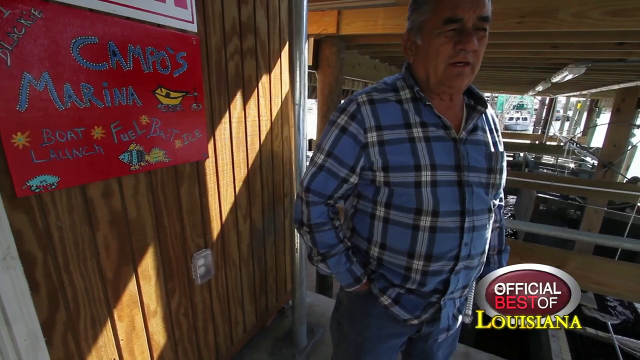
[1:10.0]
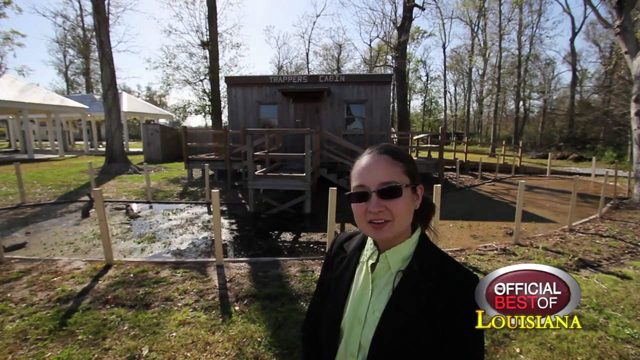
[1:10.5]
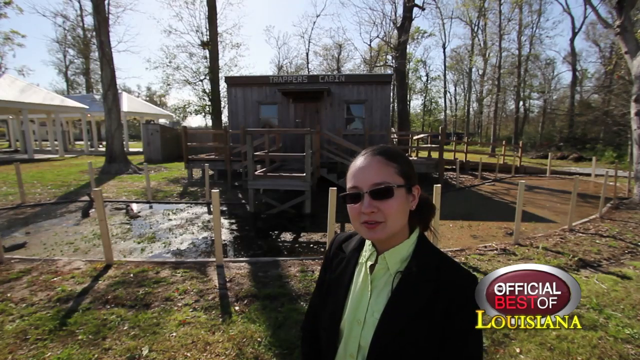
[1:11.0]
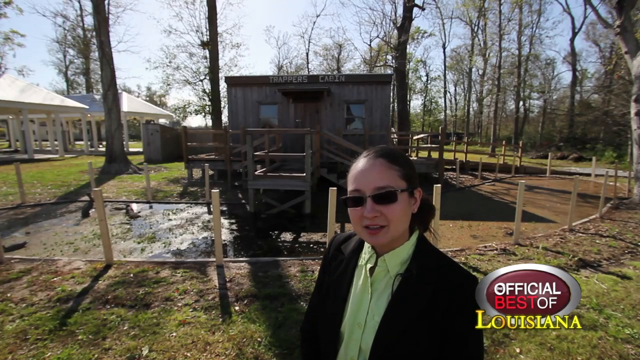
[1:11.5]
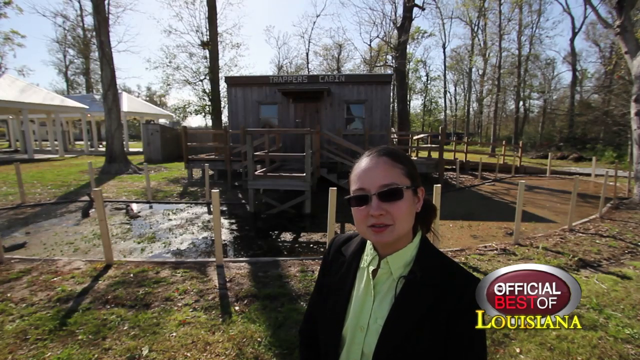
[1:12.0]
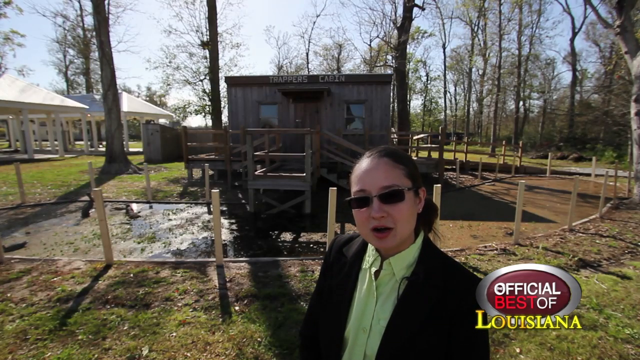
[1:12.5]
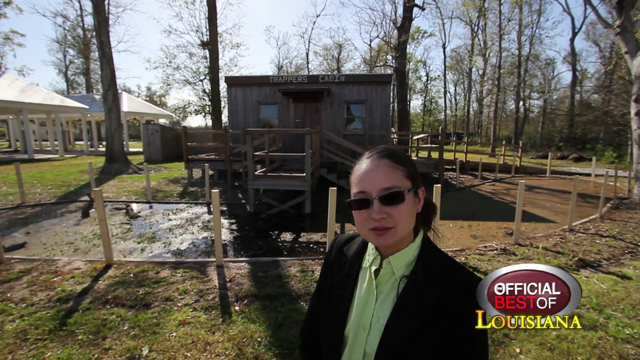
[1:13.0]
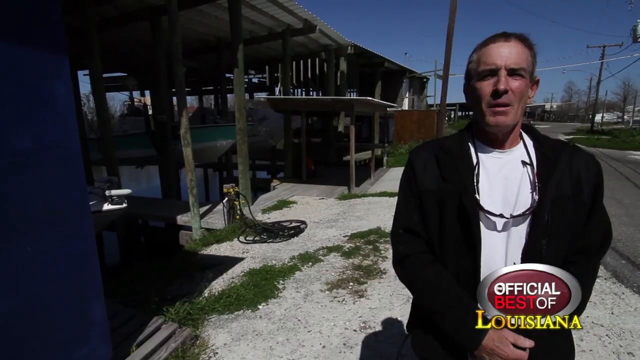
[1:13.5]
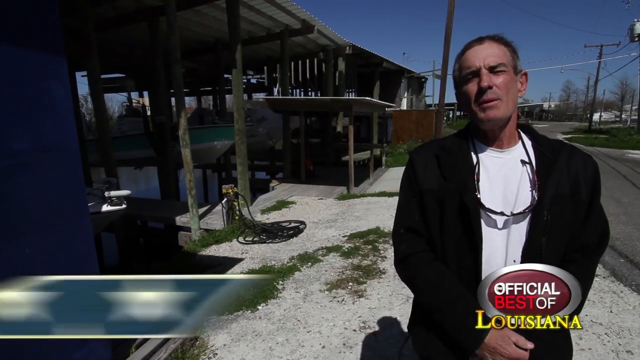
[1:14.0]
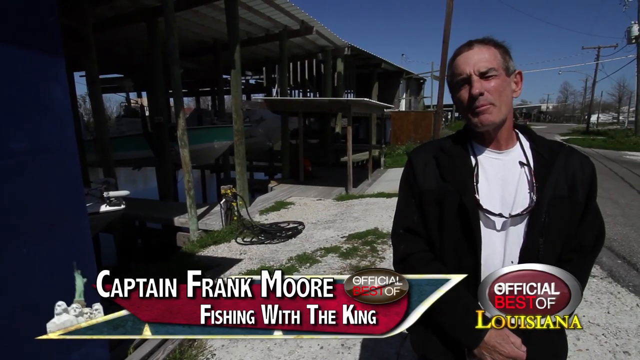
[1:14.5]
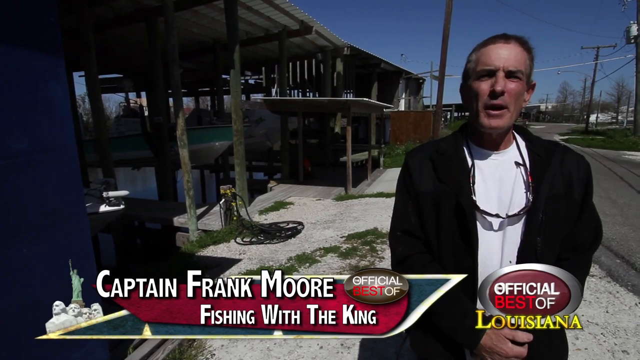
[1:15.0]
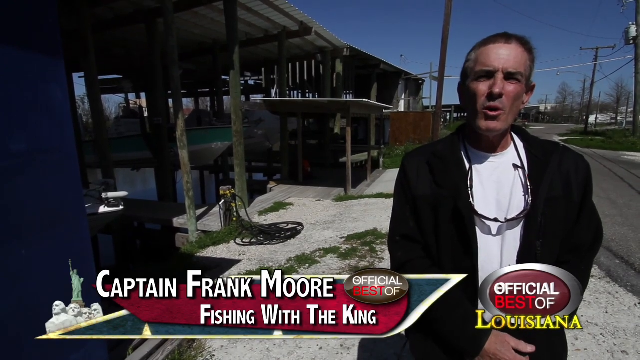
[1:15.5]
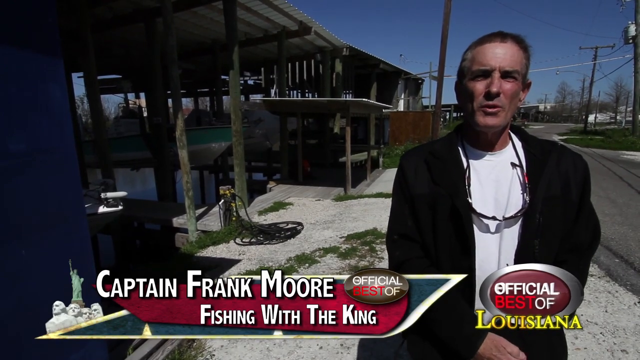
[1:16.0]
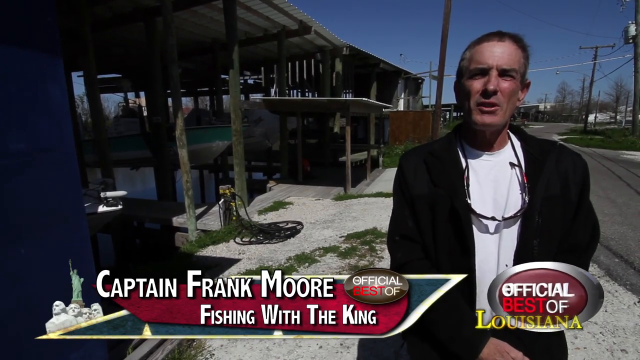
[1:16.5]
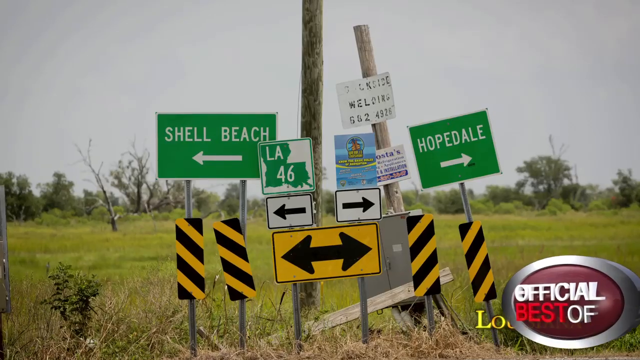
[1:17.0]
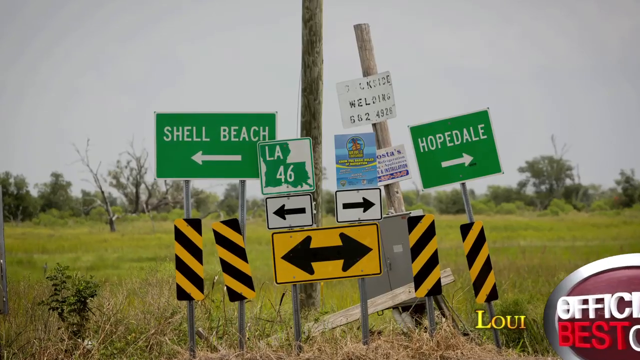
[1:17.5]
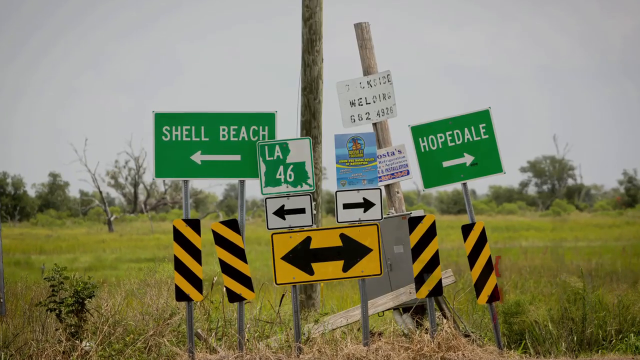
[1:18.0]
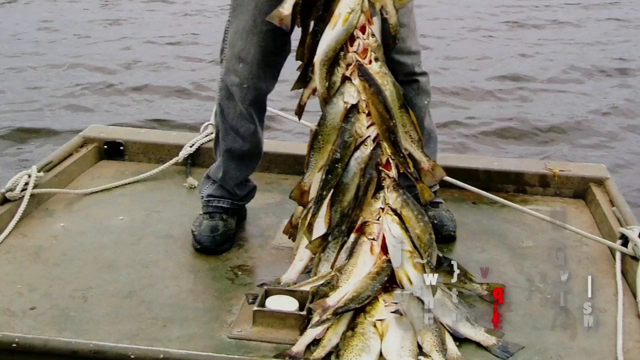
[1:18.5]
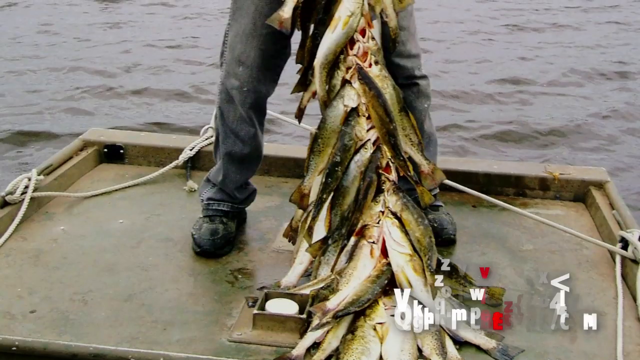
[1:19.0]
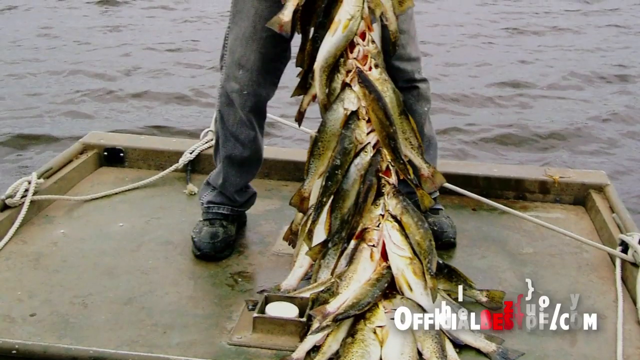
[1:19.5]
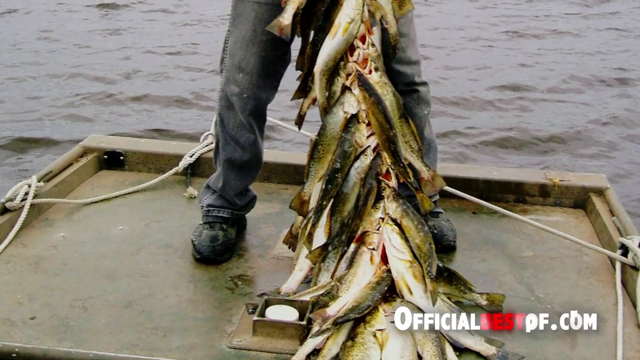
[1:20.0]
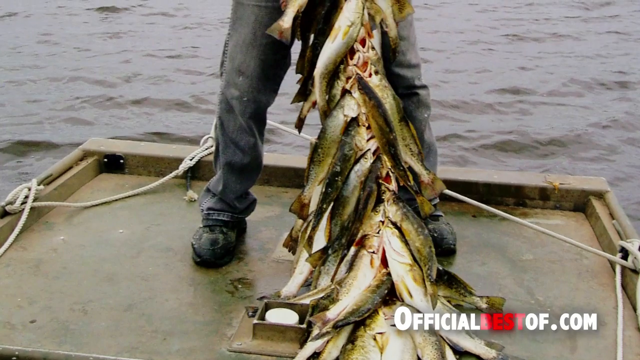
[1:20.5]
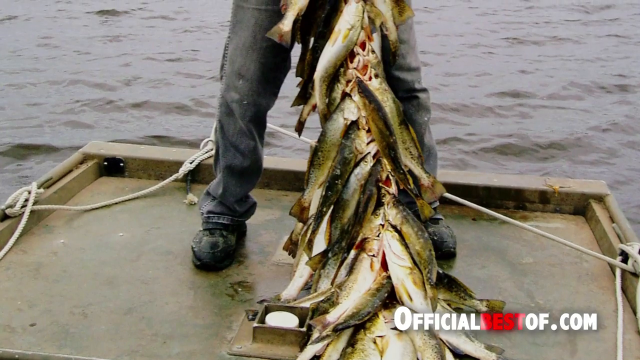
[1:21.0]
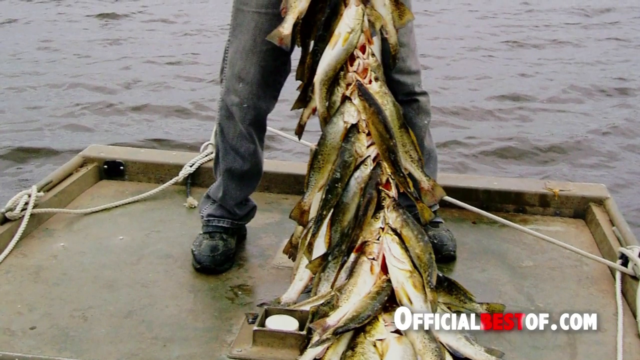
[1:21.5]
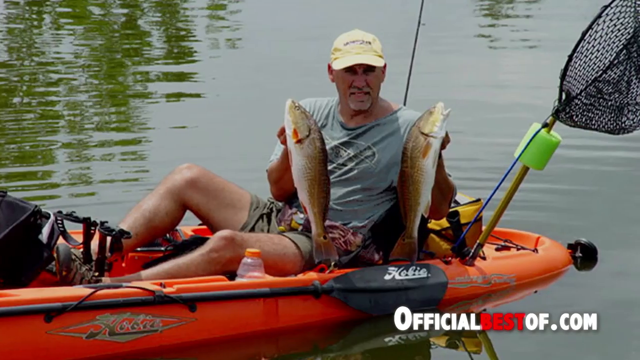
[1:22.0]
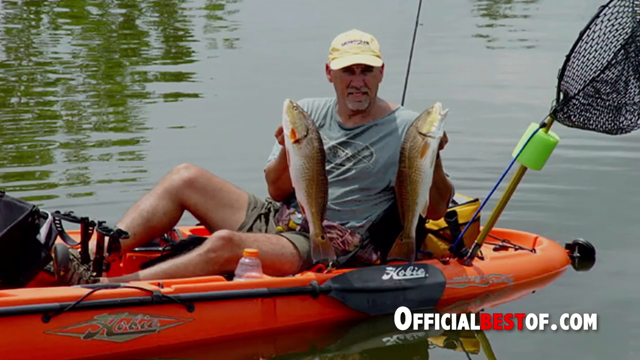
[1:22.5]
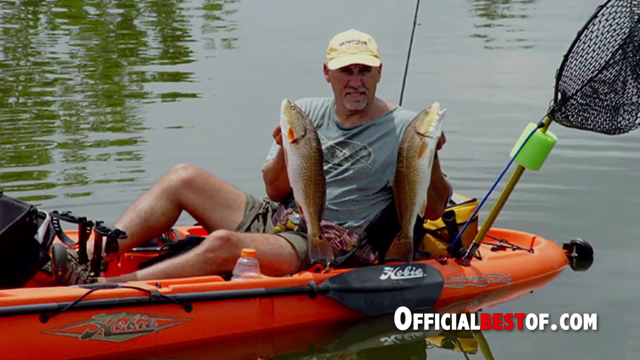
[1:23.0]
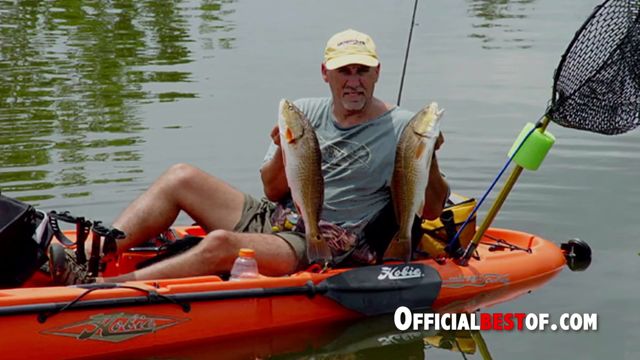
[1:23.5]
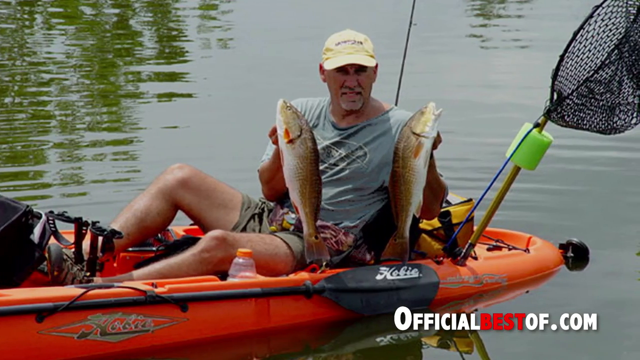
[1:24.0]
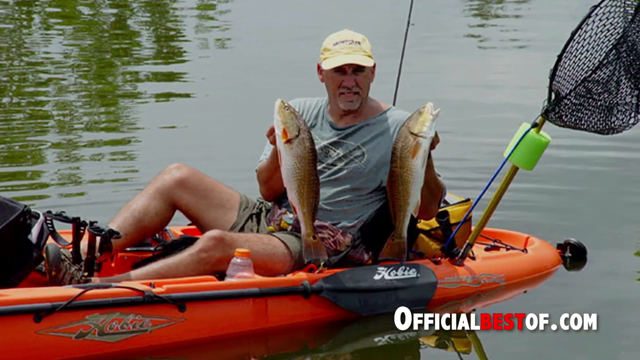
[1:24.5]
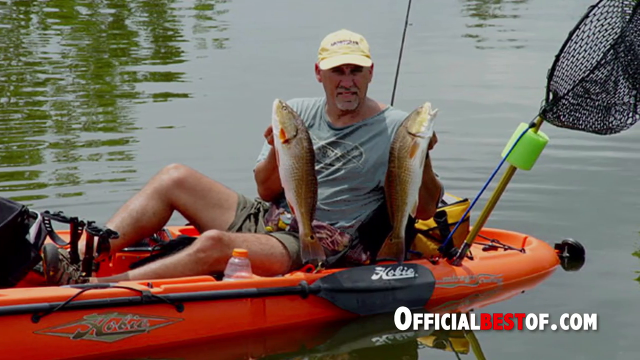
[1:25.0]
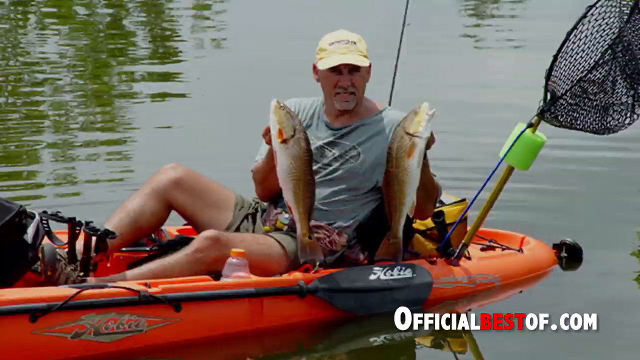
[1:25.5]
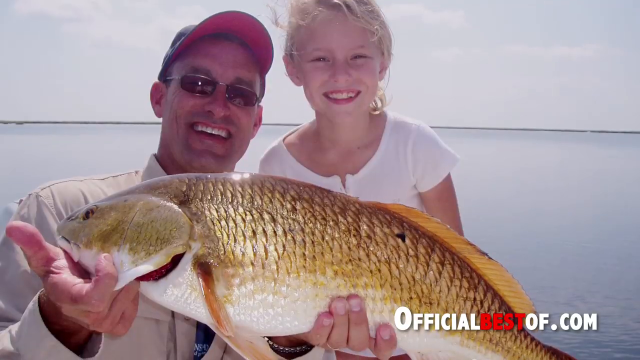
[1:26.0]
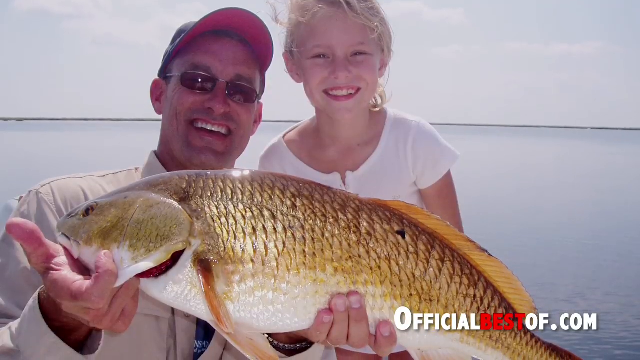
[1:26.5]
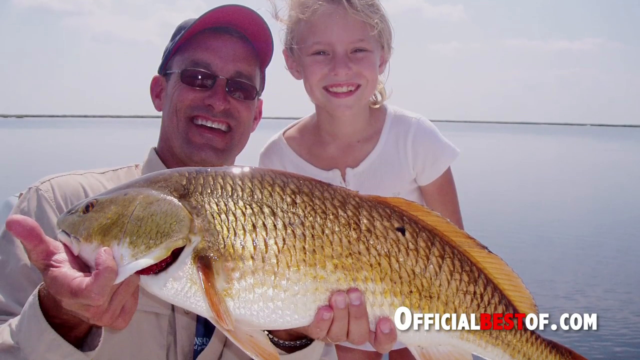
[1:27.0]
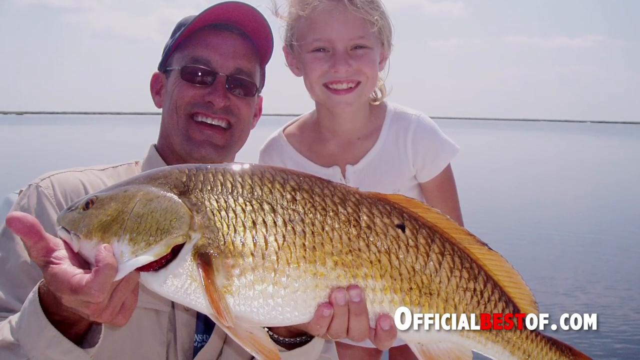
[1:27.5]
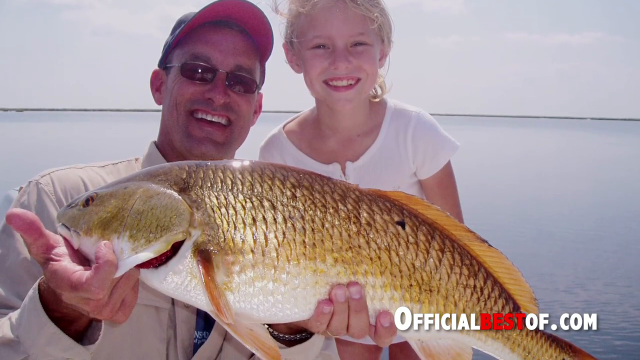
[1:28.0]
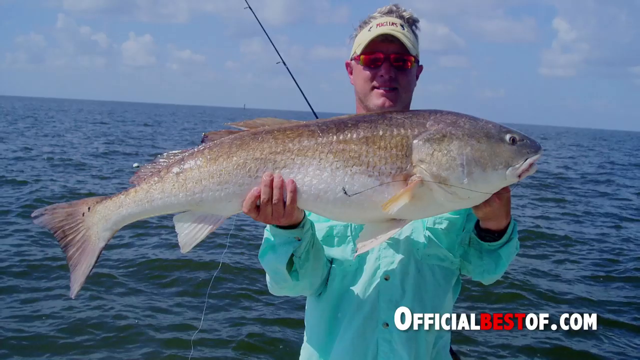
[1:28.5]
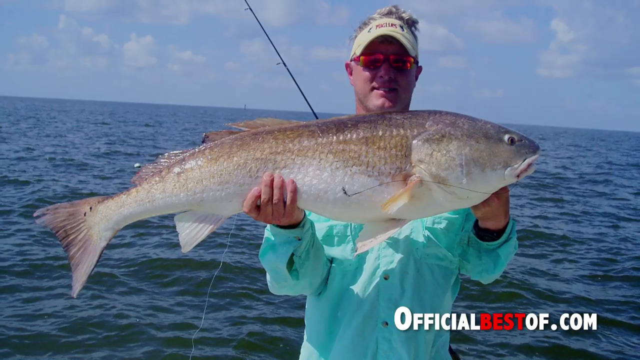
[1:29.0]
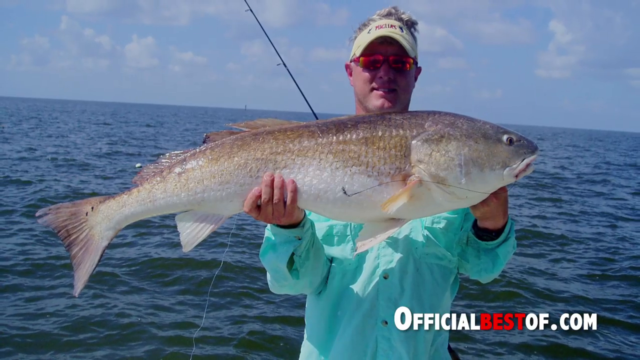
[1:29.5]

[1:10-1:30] The same woman with the black sunglasses appears in the same place, talking. The video cuts to another person in a similar interview style: a man in a black vest and white undershirt, with sunglasses hanging from his neck, named Captain Frank Moore; apparently a subtitle reads "fishing with the king". Next, street signs and other signs are shown meshed together: one on the left says "Shell Beach" and points left, and one on the right says "Hopedale" and points right, with other arrows in the middle pointing left and right, as well as some advertisement signs. A picture shows someone with a bunch of fish latched together, seemingly all on the same string. More pictures follow of people holding up their fish and looking happy, including one where the fish is basically as tall as the man's head and way bigger than his torso.